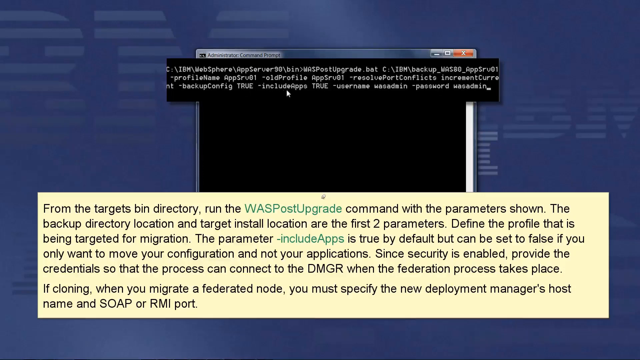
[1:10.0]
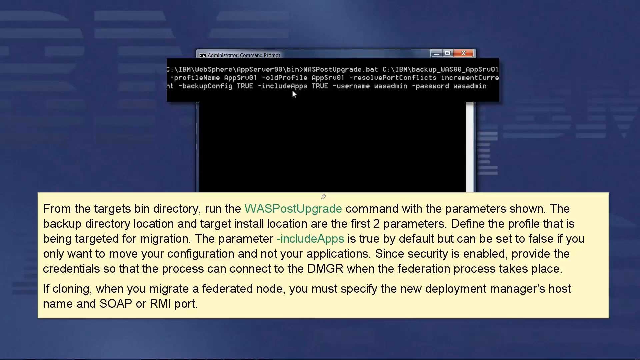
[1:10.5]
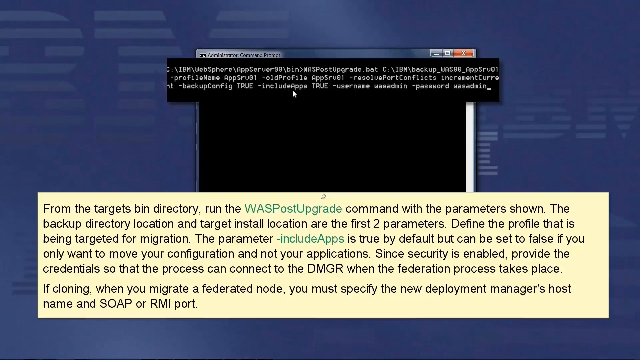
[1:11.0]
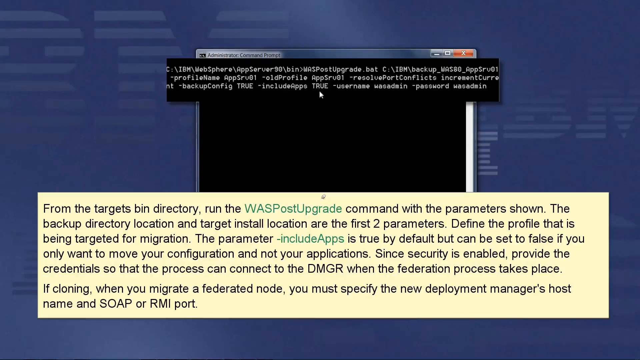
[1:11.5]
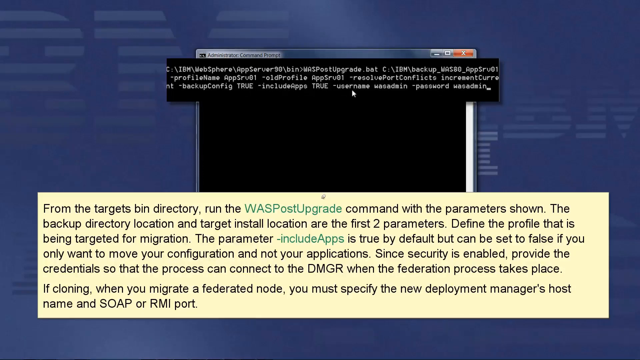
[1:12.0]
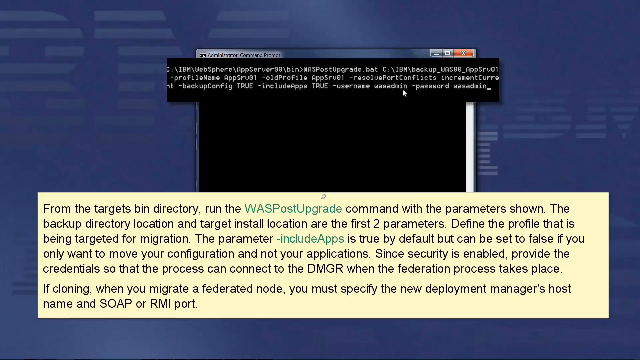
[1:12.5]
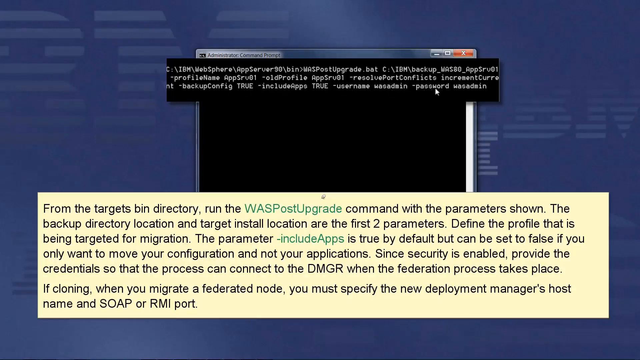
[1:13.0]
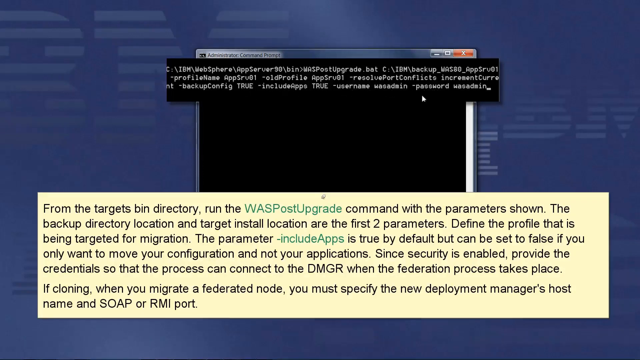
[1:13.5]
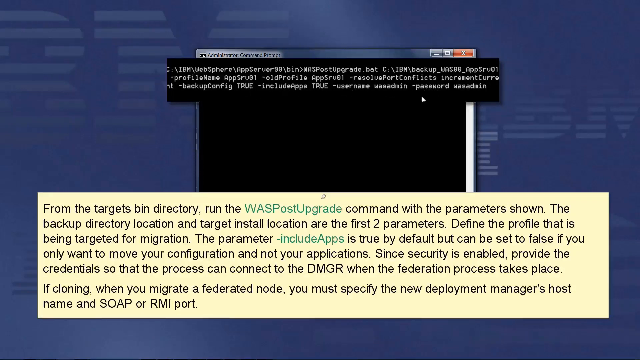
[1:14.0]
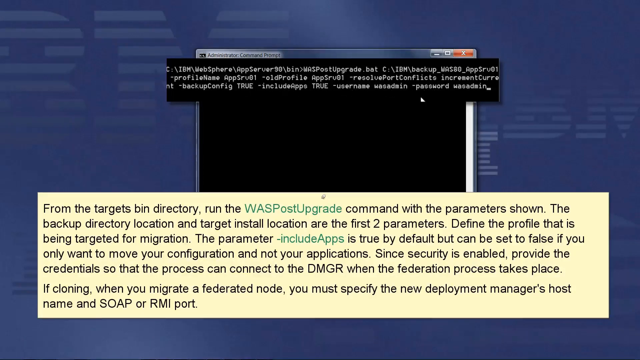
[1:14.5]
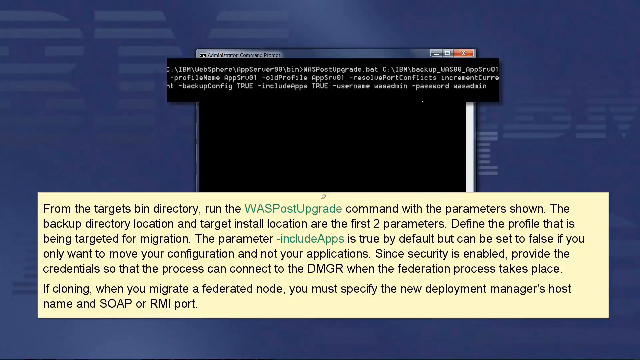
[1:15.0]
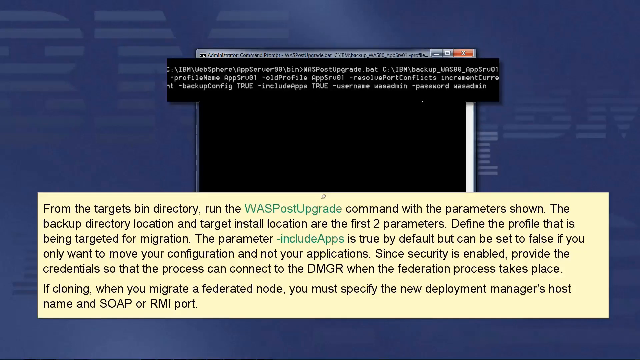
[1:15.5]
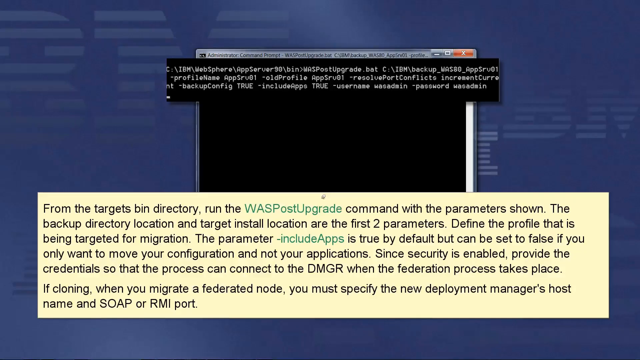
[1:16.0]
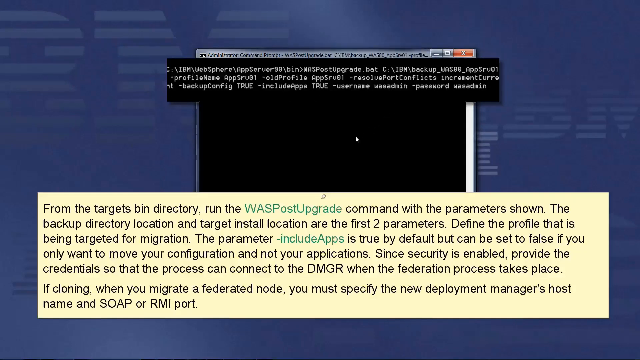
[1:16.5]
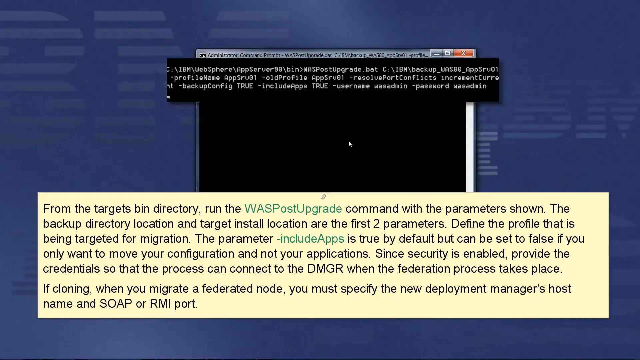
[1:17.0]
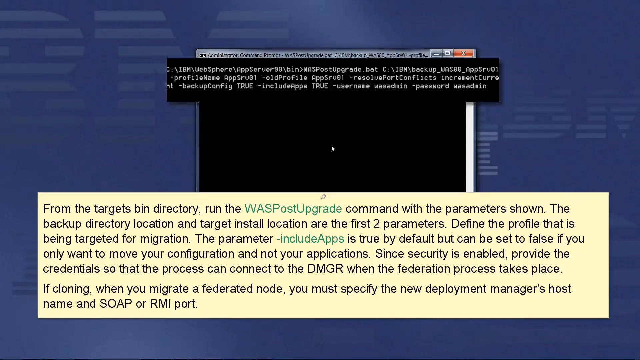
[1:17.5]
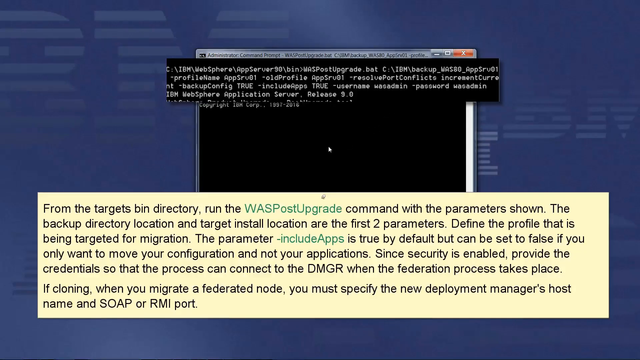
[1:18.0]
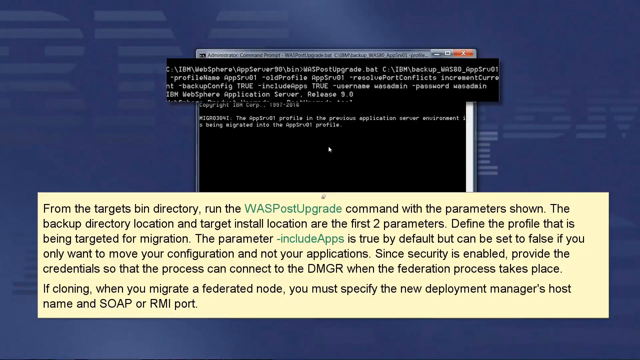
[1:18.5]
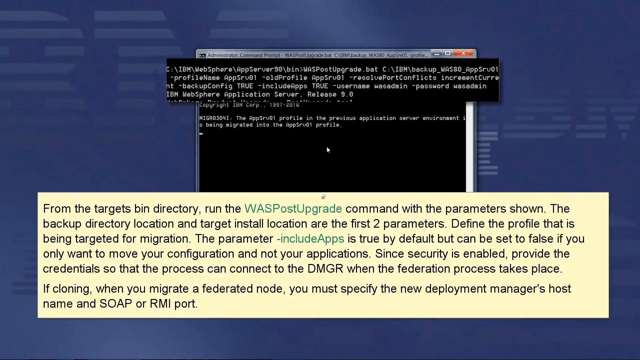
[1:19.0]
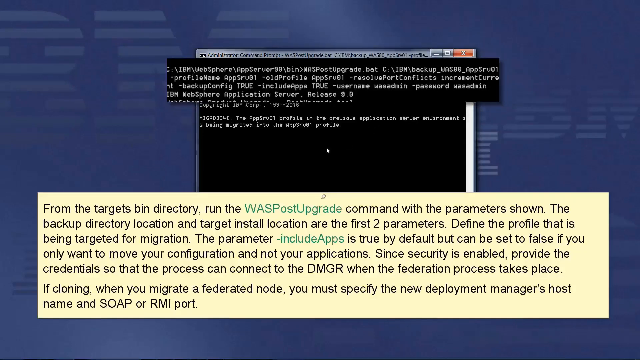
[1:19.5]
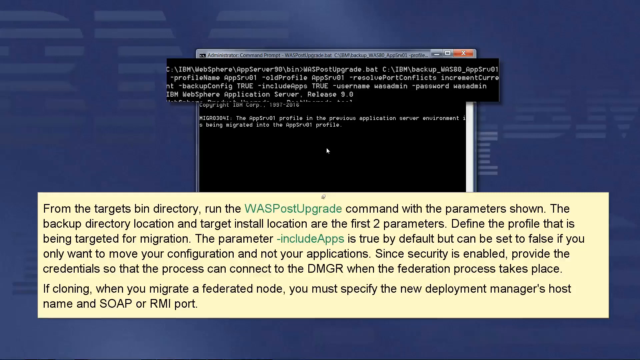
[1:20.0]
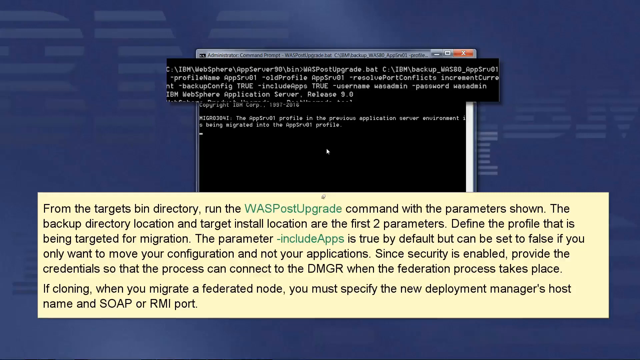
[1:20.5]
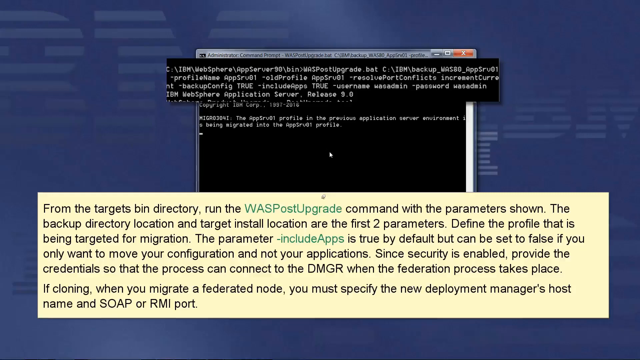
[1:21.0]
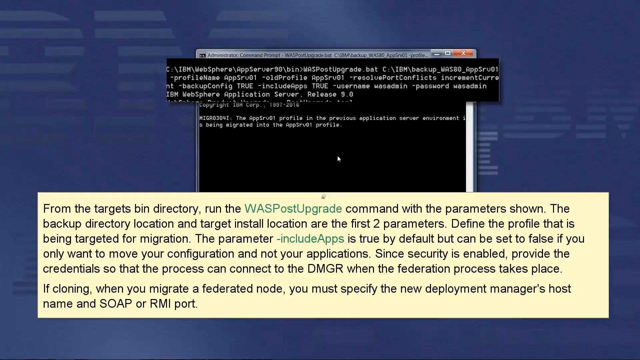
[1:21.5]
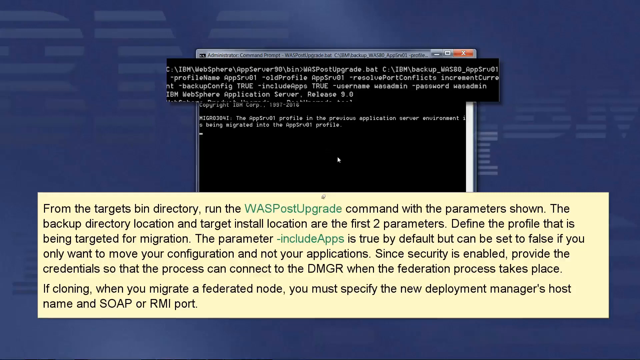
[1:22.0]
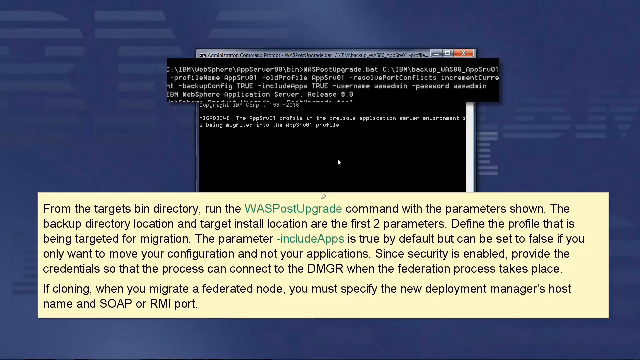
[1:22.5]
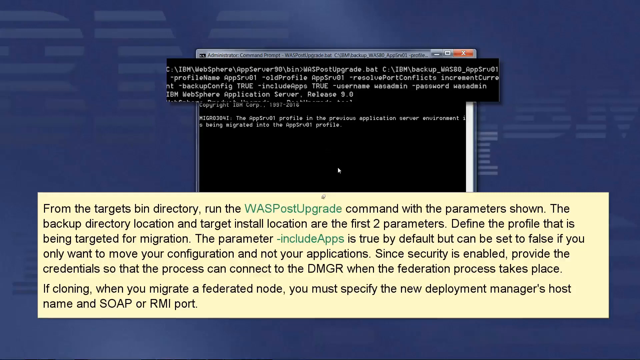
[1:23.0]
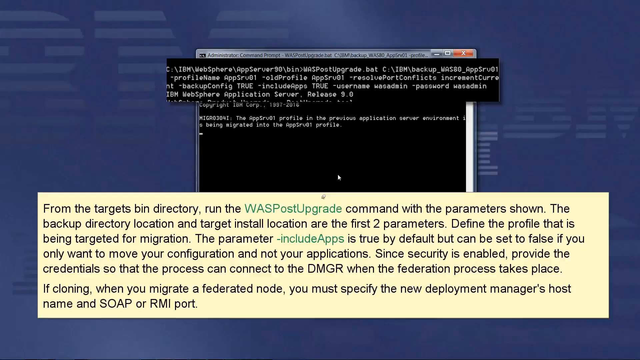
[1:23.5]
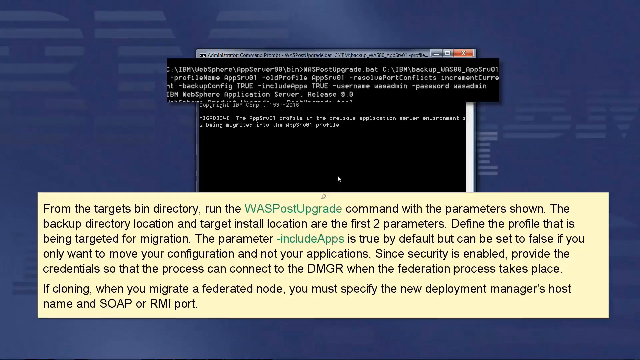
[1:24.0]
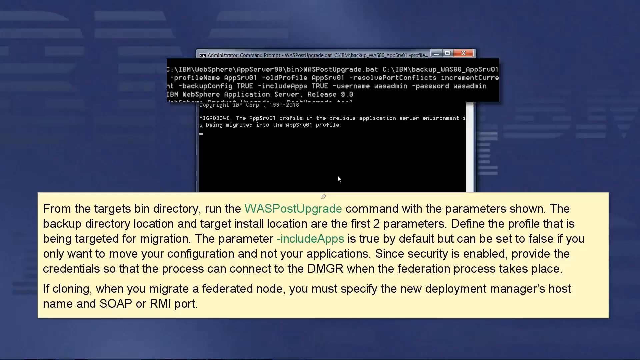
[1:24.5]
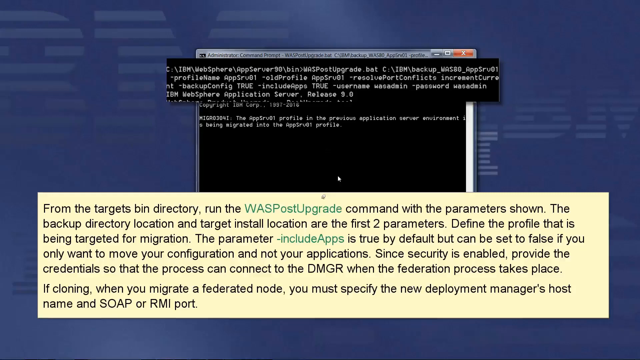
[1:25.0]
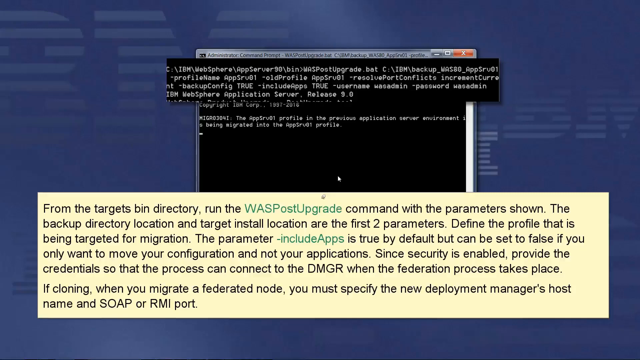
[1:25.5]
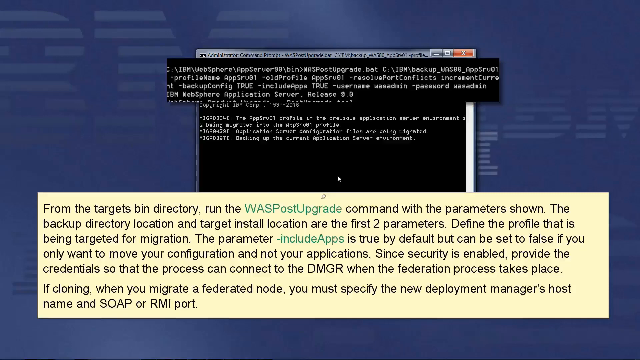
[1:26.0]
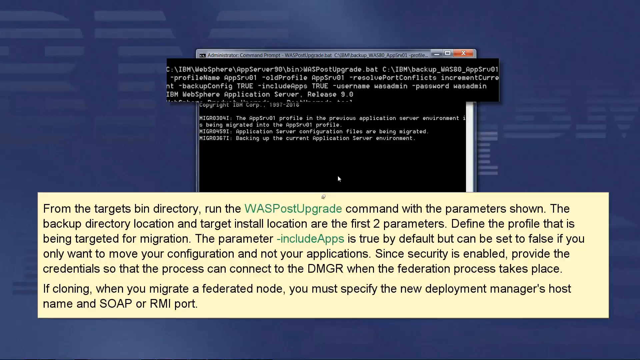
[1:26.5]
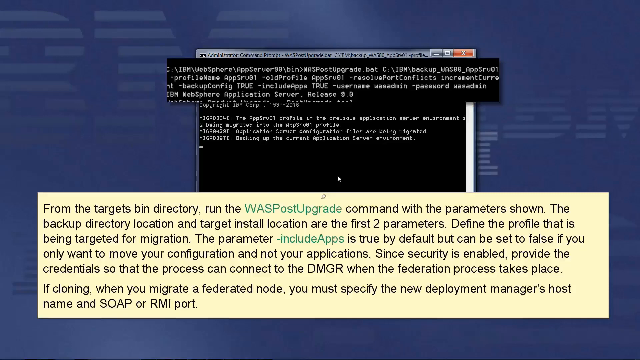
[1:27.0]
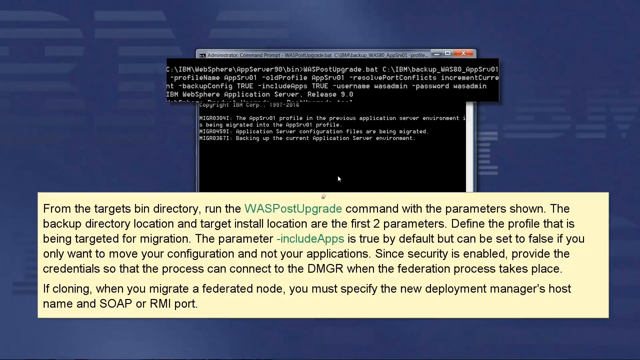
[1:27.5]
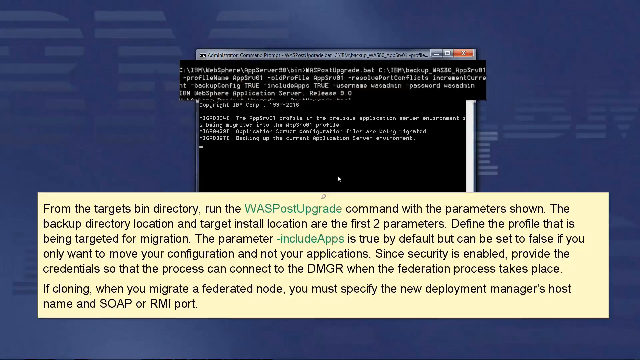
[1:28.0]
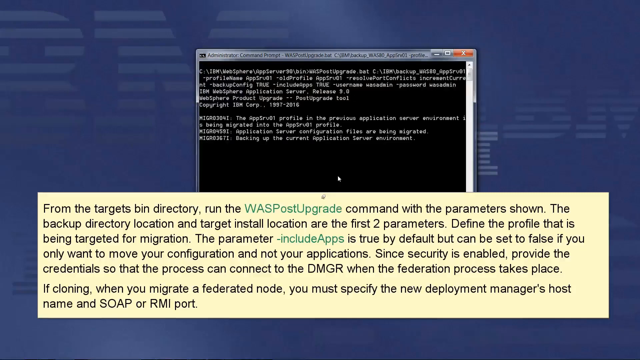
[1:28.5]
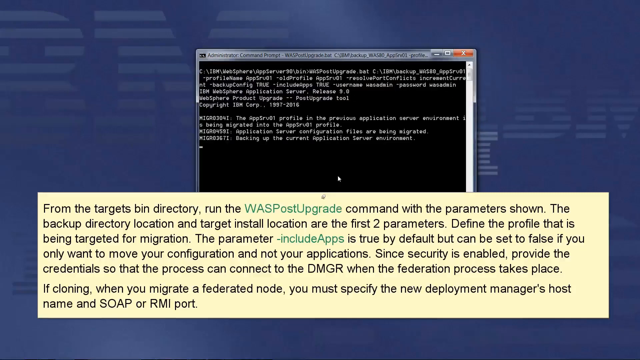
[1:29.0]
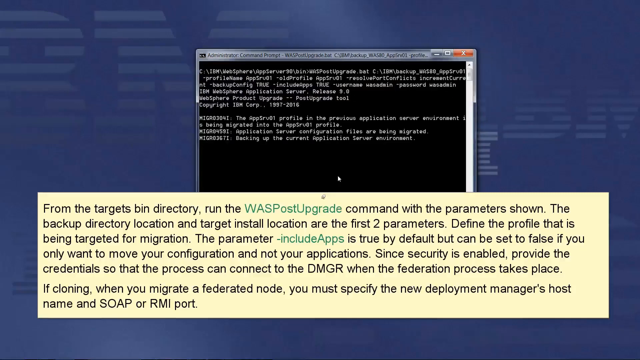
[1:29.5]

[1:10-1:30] The command prompt window is open with pasted text that is kind of magnified and popping out of the command prompt so it is easier to see. At the bottom of the screen, a large yellow rectangular box with lots of black text gives instructions on how to run the WASPostUpgrade command and what to do next. The user's mouse hovers over the magnified text, moving left to right as if reading it. The user hits enter to send the pasted text, and the command prompt shows text saying "the AppSrv01 profile in the previous application server environment is being migrated into the AppSrv01 profile." It pauses for a few seconds with the cursor blinking, then more text appears: "application server configuration files are being migrated," followed by "backing up the current application server environment." The magnified text then returns to its regular size inside the command prompt window.